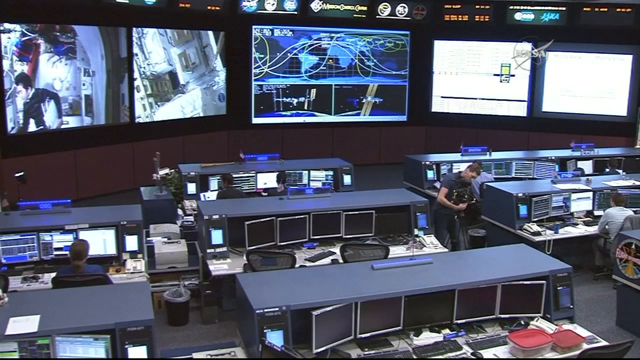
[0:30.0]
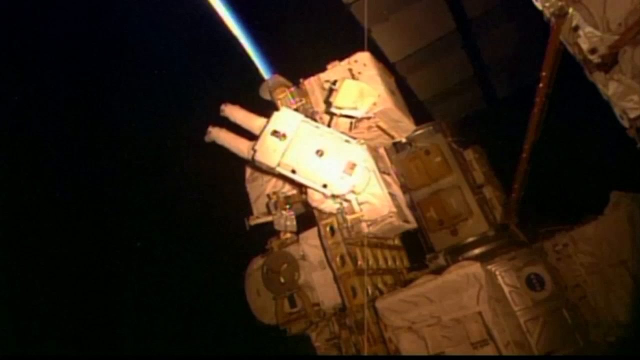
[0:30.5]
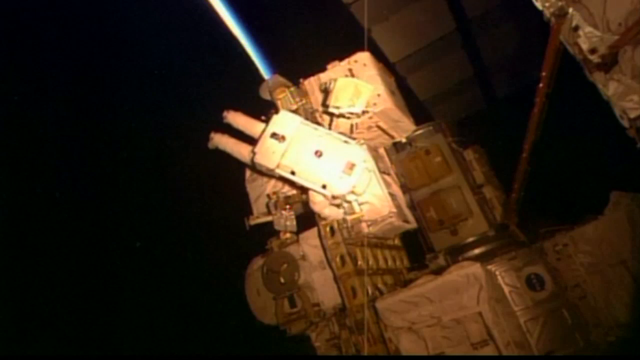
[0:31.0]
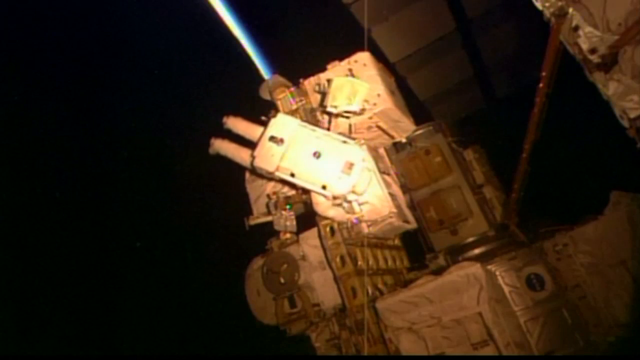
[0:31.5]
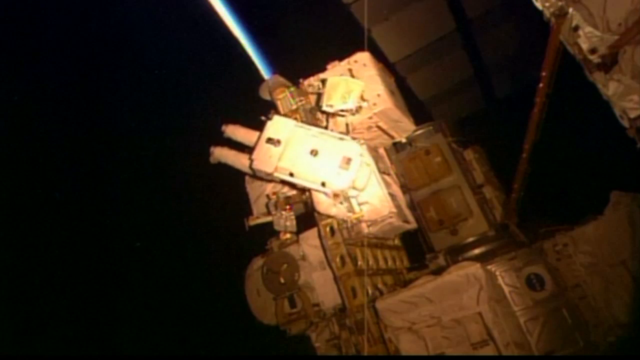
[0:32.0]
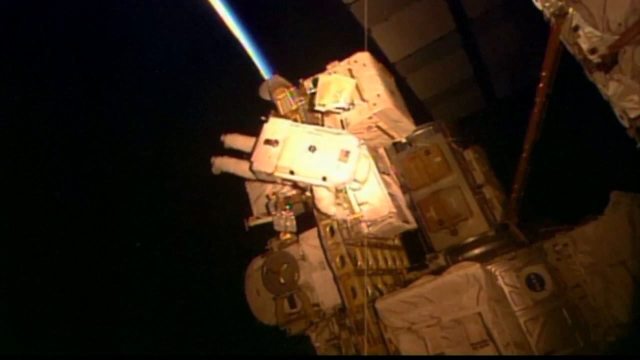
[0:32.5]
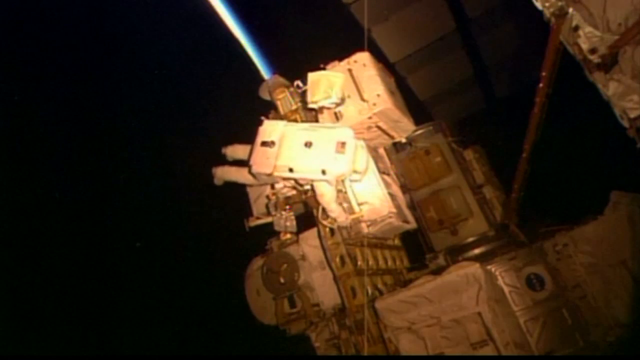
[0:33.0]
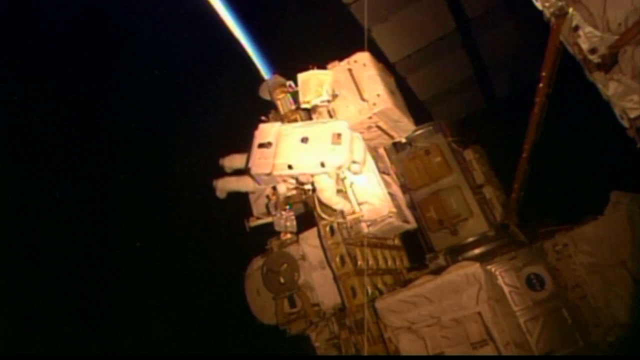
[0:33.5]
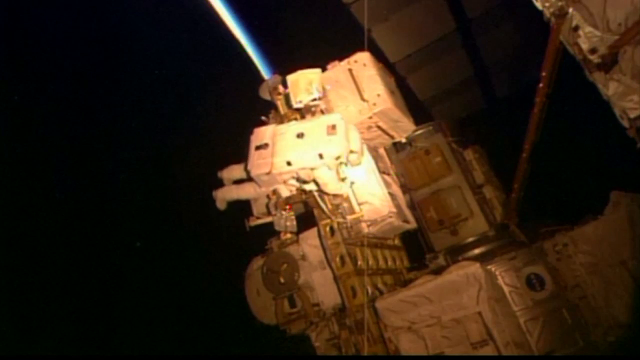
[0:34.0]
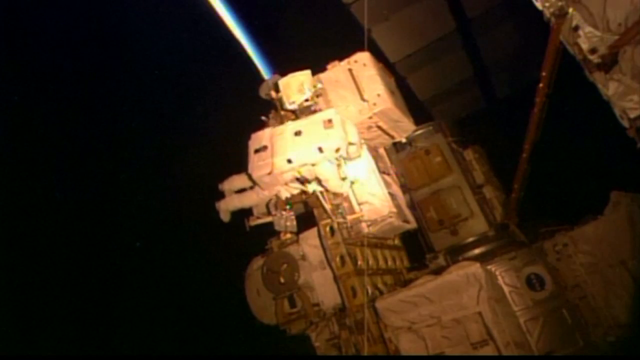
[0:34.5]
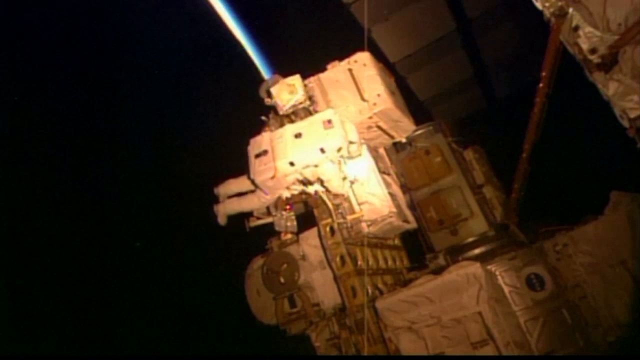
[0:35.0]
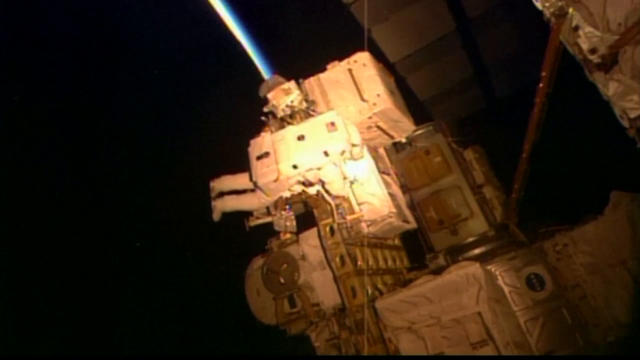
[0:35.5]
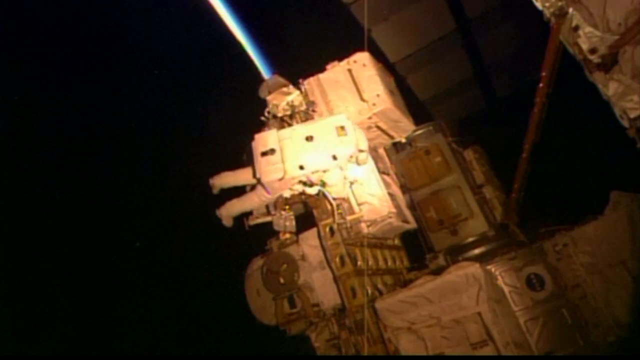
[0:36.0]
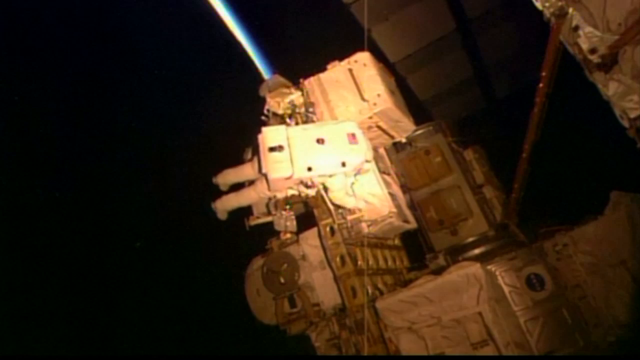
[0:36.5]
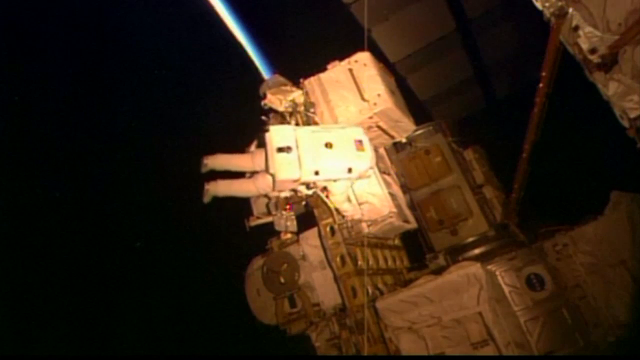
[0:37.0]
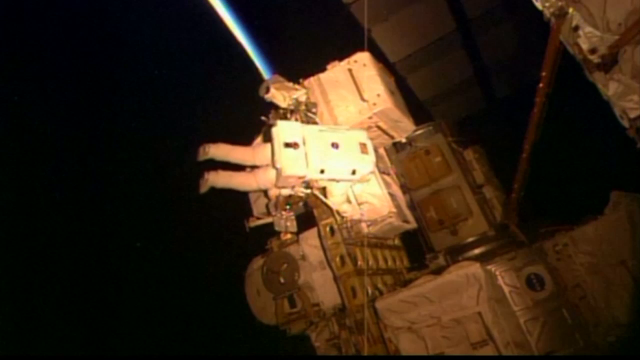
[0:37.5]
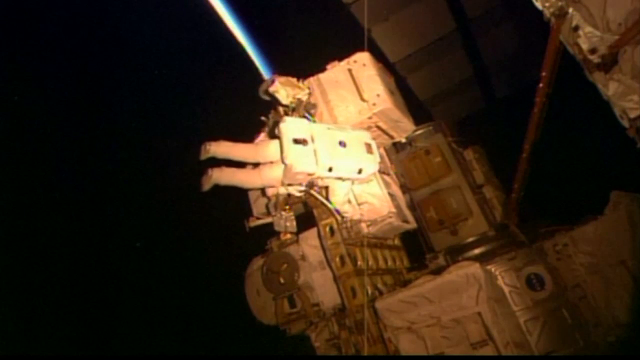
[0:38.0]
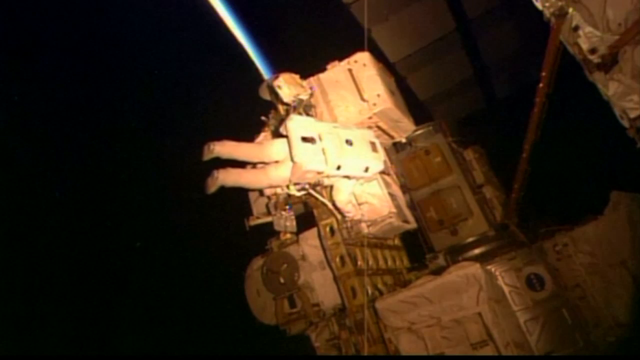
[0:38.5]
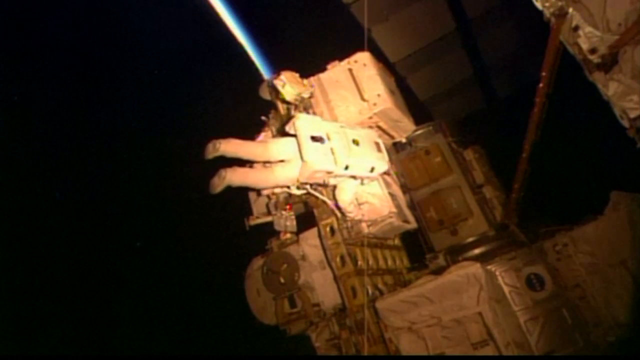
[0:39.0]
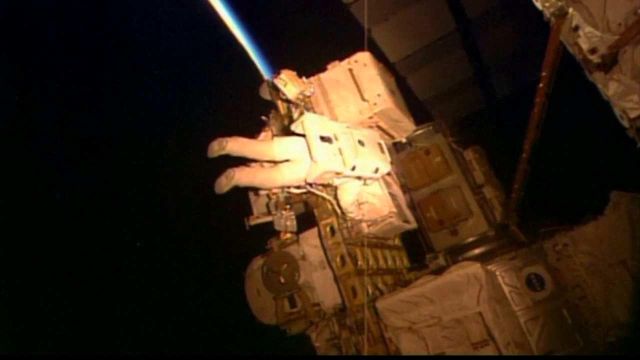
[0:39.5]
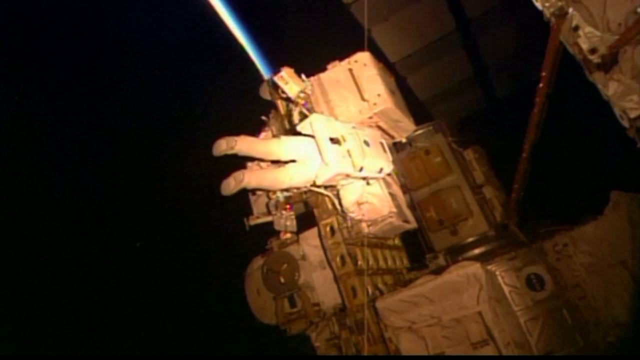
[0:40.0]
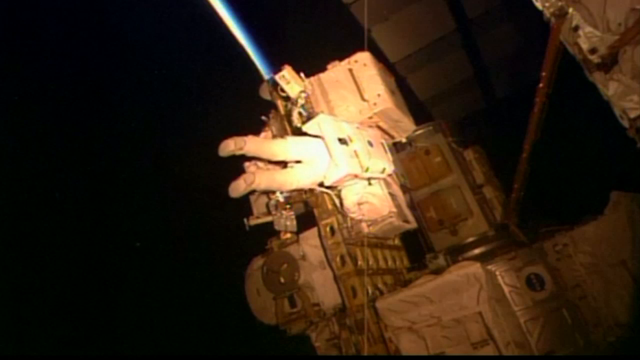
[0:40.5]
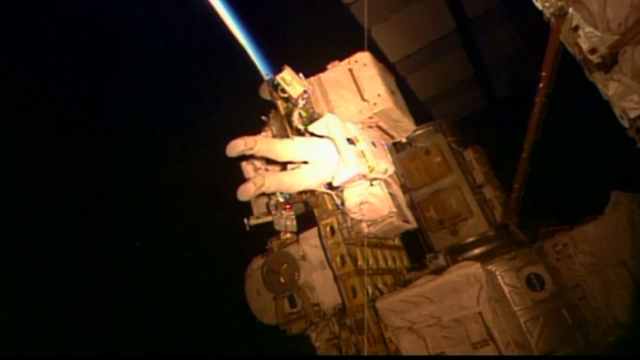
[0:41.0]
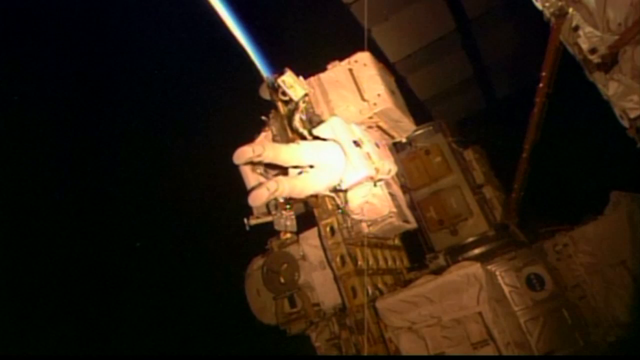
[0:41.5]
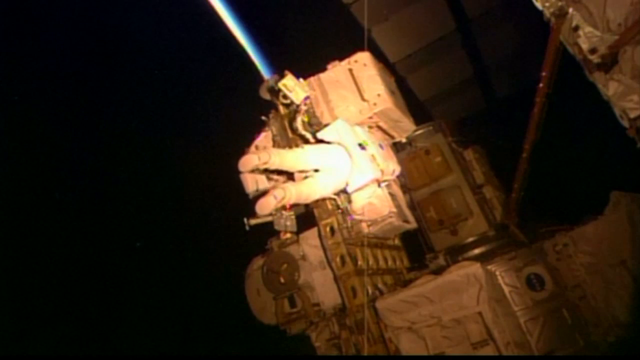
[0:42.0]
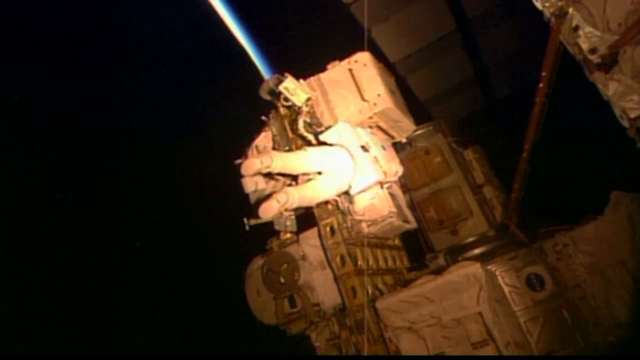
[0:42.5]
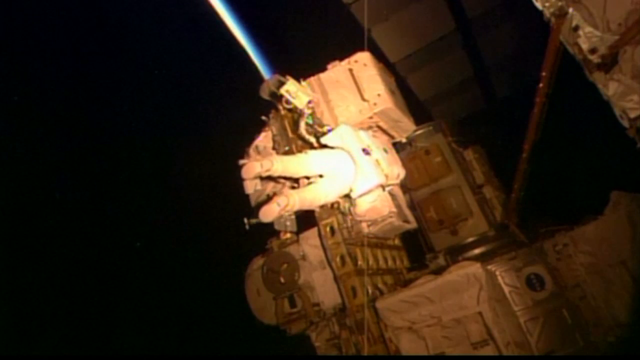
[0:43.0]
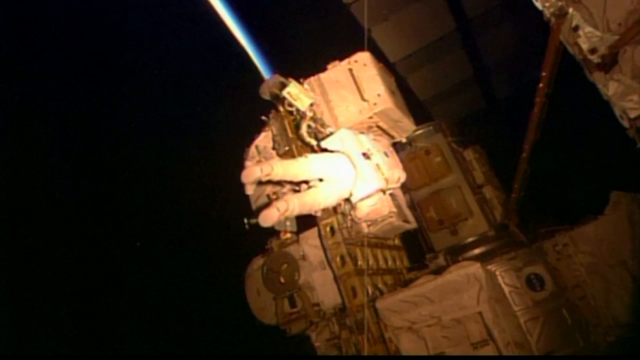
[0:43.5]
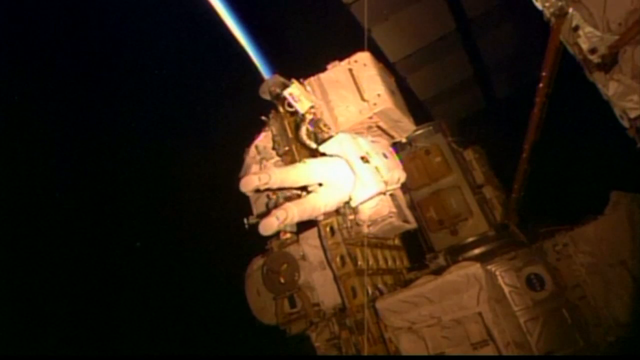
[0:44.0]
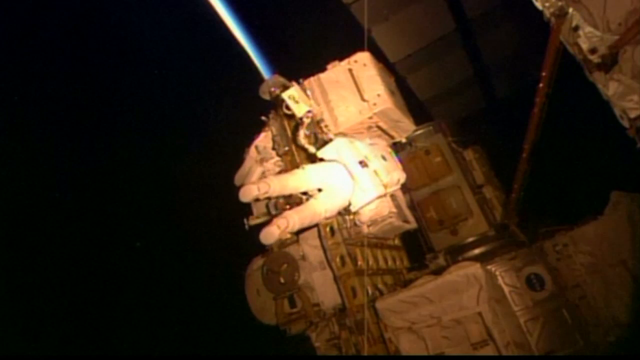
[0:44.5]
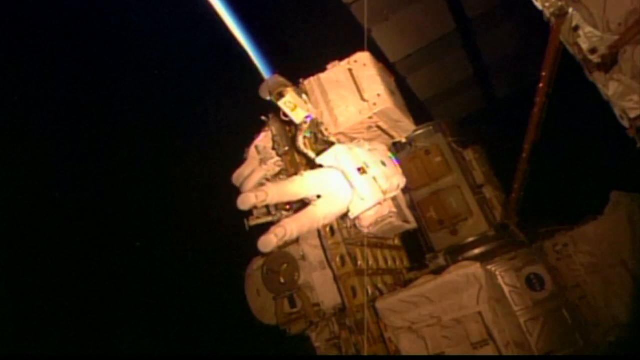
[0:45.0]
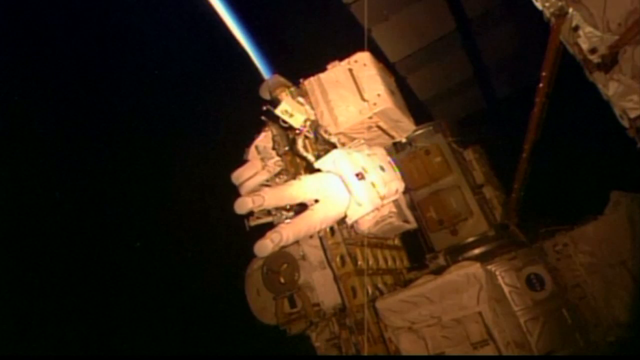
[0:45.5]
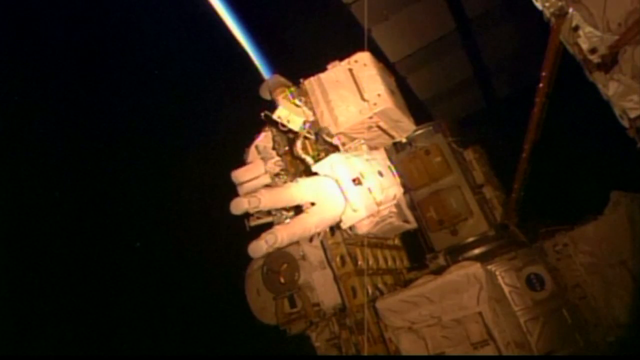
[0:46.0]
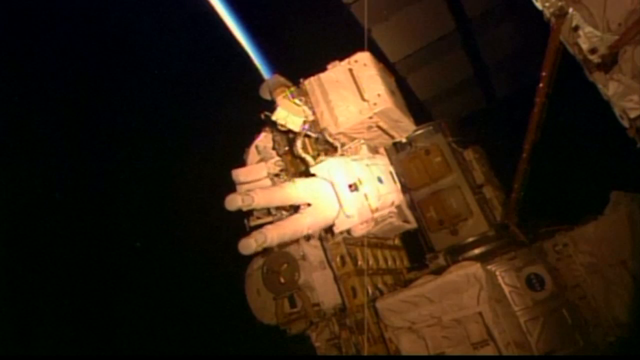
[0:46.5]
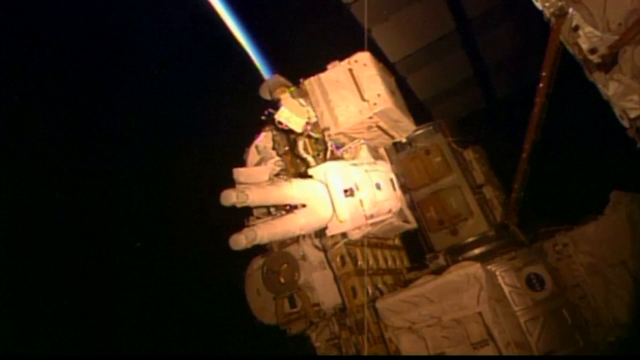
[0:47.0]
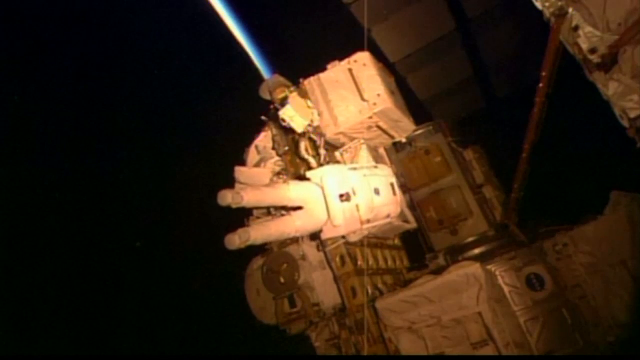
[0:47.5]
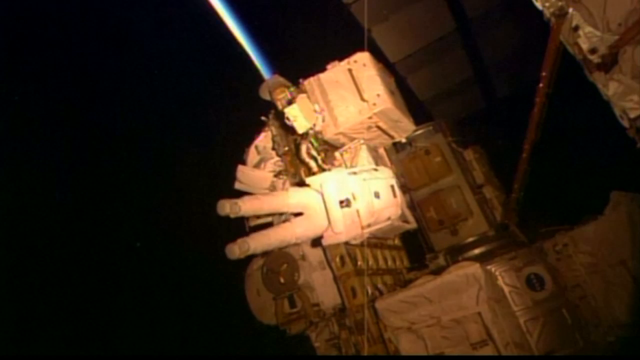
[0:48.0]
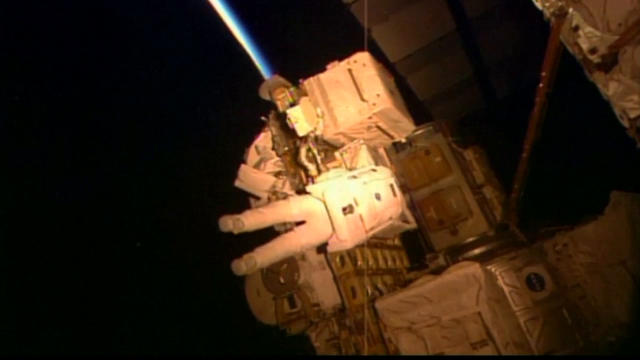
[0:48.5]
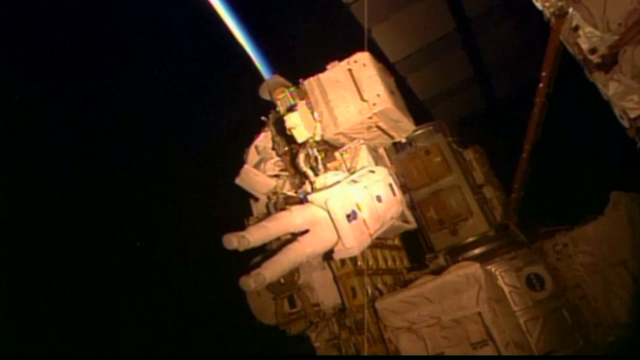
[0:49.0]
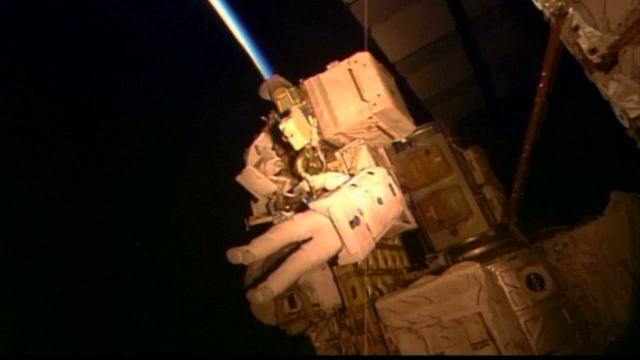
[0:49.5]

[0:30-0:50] An astronaut in a white spacesuit works on a white structure in space. The structure takes up most of the right-hand side of the screen, with panels visible in the center. From the top of the structure to the top of the screen there is an arc of light whose origin is not clear. The astronaut is in the center of the screen, initially facing completely away from the camera with his feet pointing toward the left side of the screen and his head toward the right. The rectangular backpack with his air supply is visible on his back. He bends so that his feet move further toward the structure while also rotating clockwise. Once he straightens, he kicks off the structure so that his feet rotate down until they face the camera, and he then floats gently in a circular pattern.